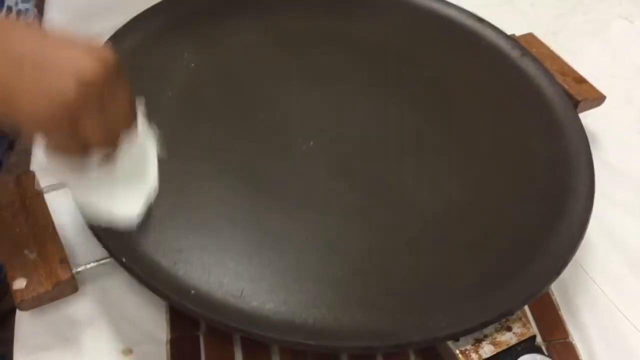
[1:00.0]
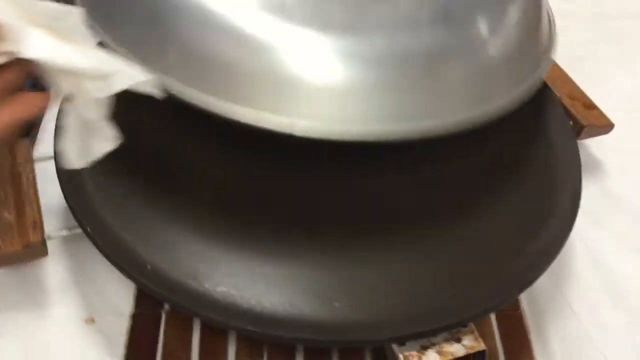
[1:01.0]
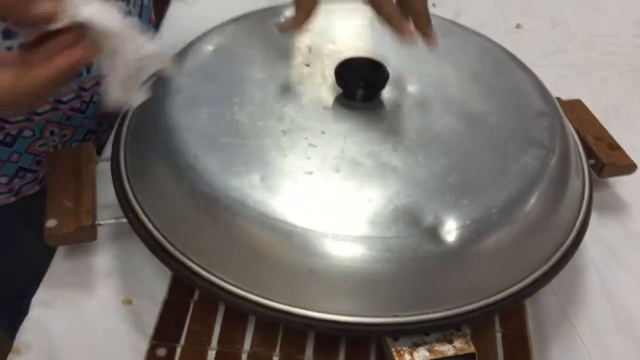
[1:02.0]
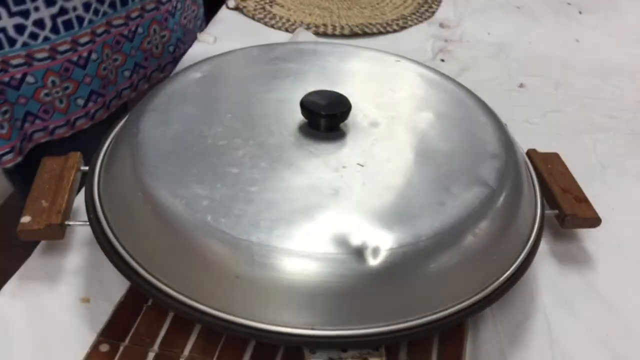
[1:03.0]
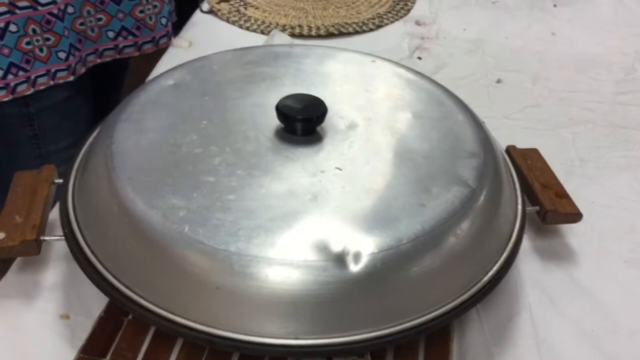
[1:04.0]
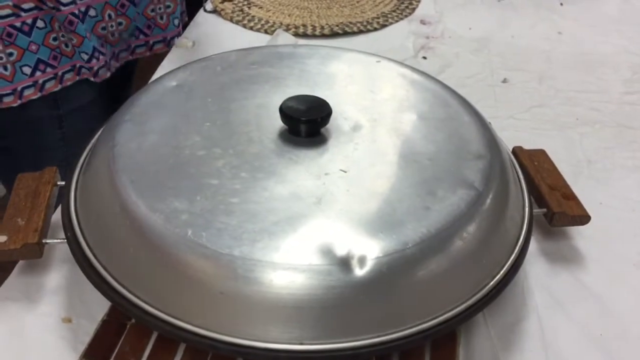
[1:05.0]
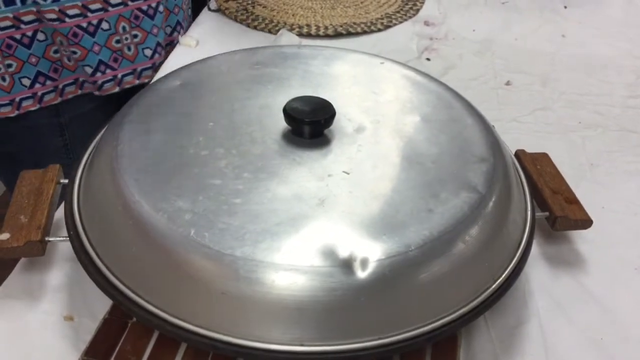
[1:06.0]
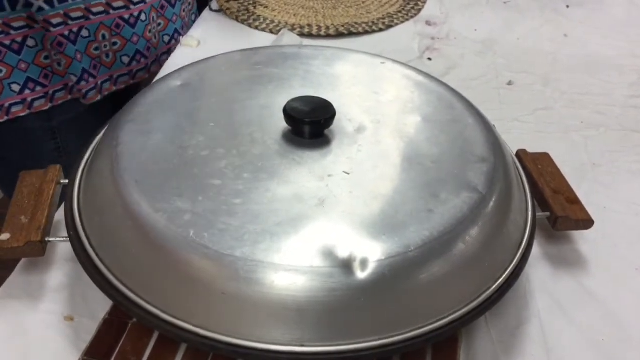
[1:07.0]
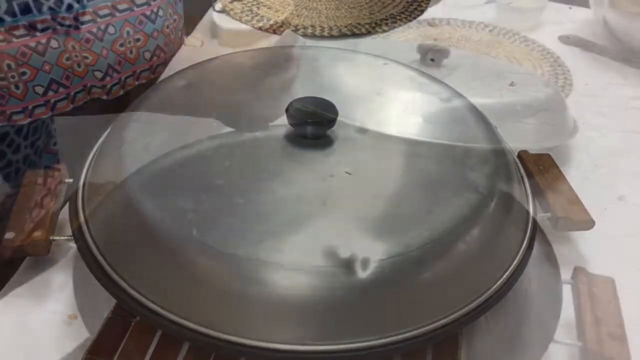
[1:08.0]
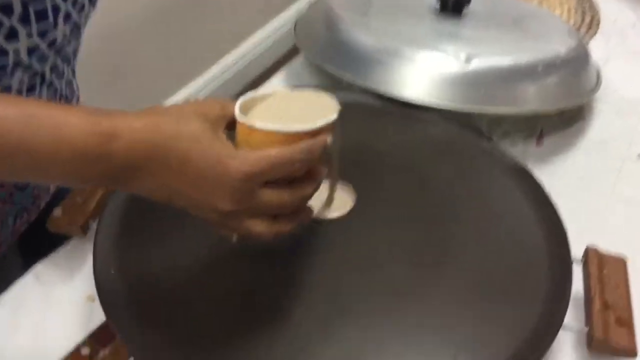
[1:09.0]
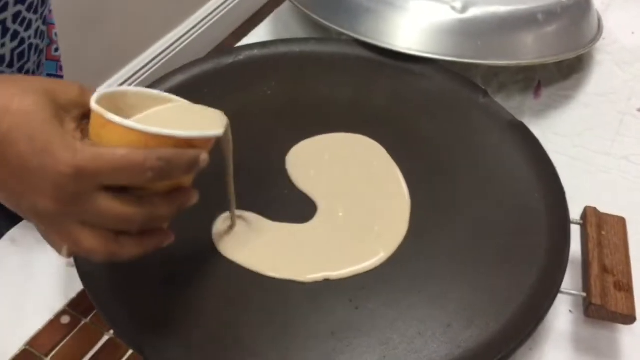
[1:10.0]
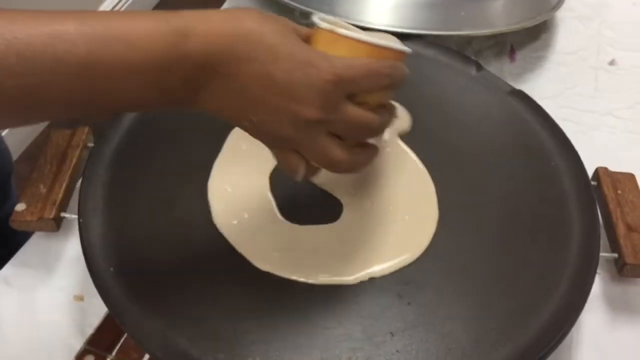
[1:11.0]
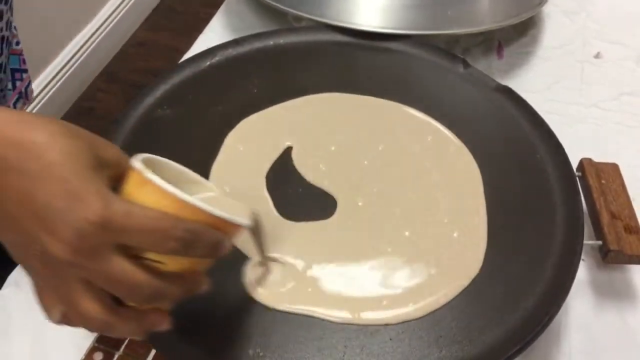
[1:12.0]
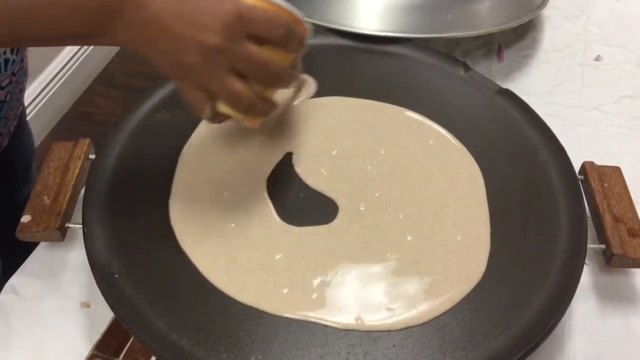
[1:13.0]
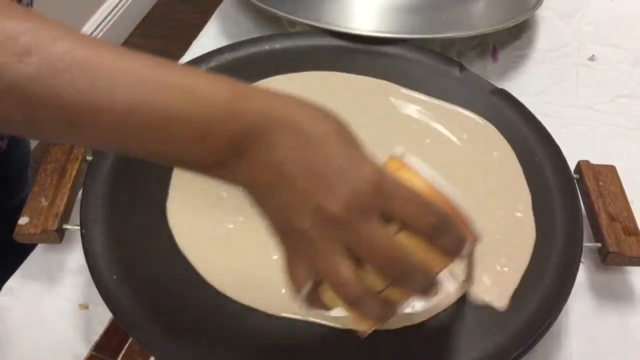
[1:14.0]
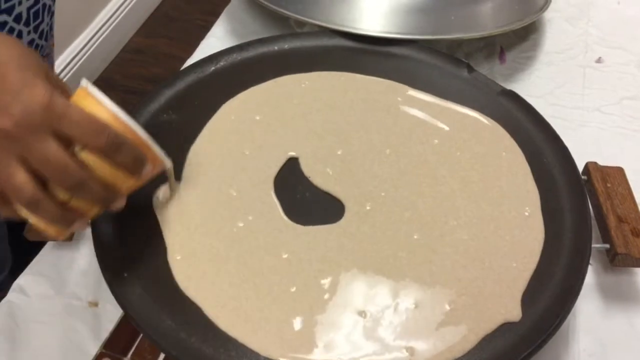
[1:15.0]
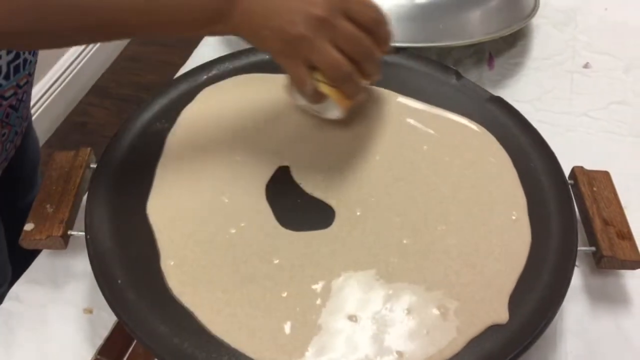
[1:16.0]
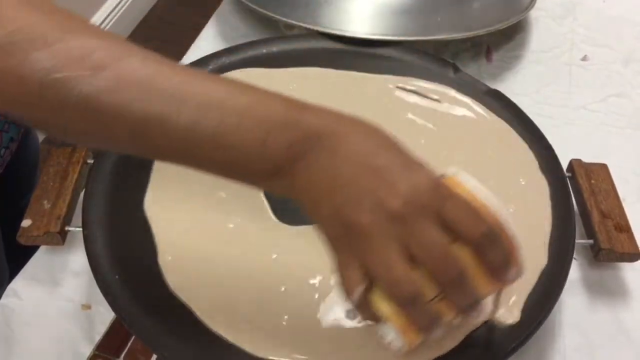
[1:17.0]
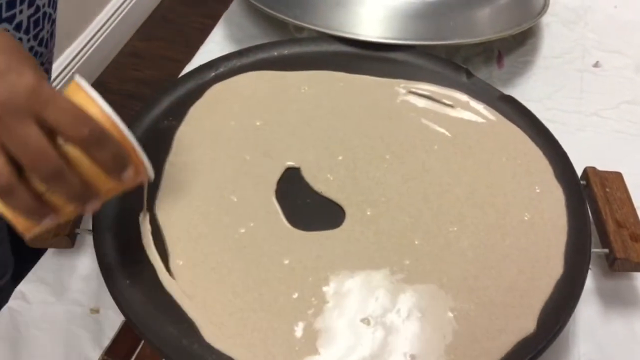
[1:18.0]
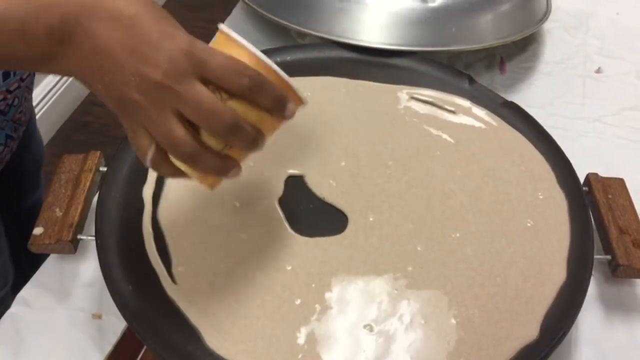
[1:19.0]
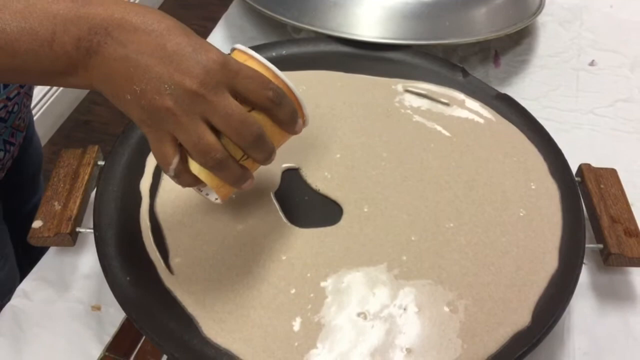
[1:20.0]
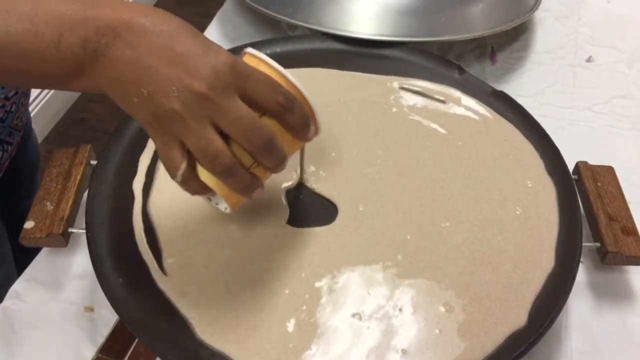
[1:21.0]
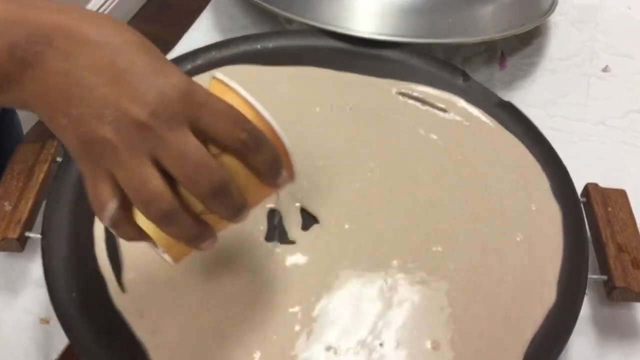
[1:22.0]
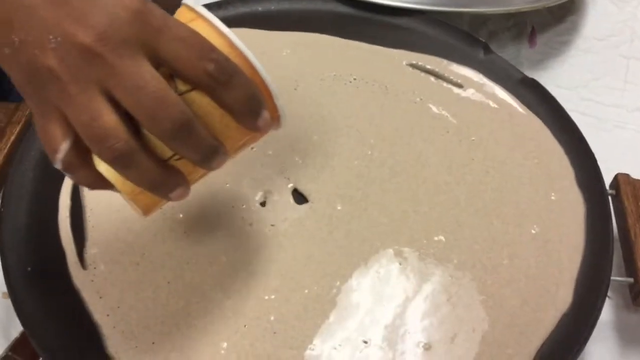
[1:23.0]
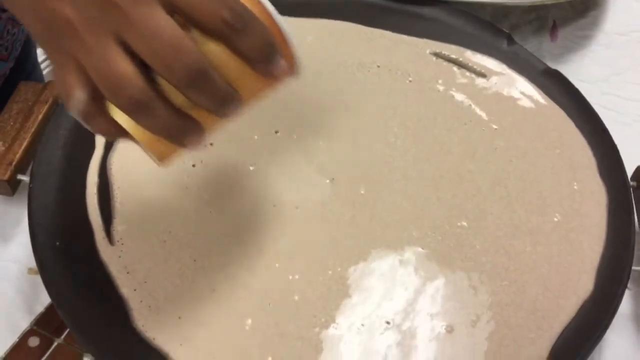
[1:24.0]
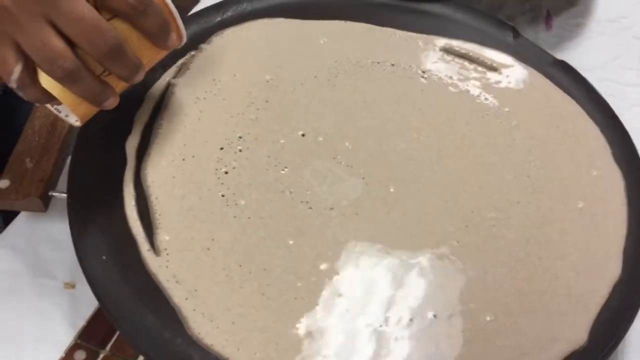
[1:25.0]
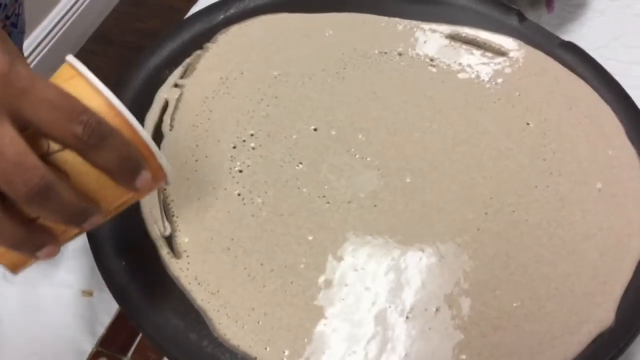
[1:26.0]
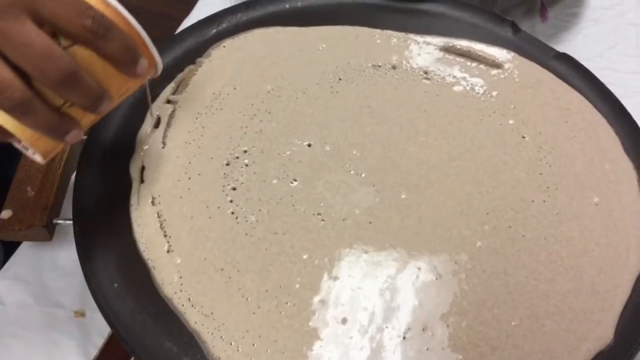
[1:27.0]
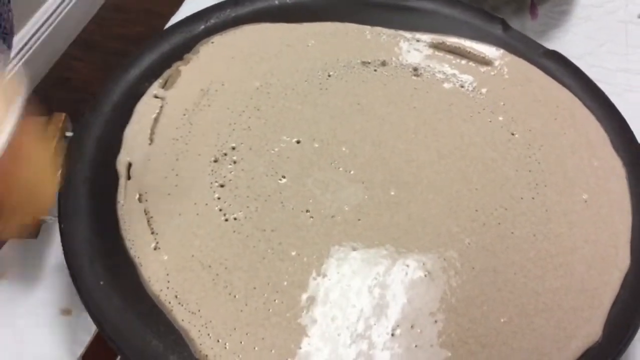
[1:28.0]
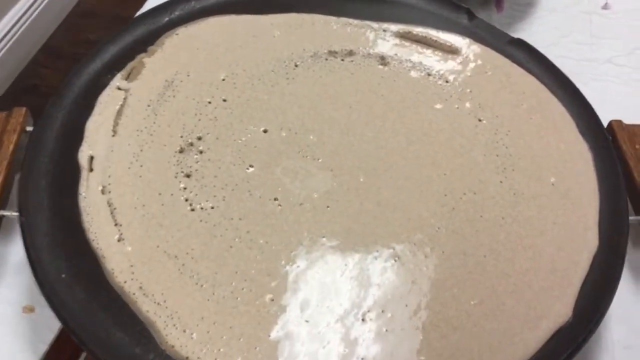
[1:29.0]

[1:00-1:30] The woman cleans the hot plate with a scrunched-up paper towel, moving it in a circular pattern. She lifts the paper towel with her right hand and, holding the handle of the lid with her left hand, places the lid back onto the hot plate before putting the paper towel down on the table, just above or behind on the desk or table. After a transition, the woman pours floury liquid from a cup in almost the same process as before, starting with an initial circle and pouring in a clockwise spiral pattern, leaving a small hole in the middle and small gaps on the sides. She then fills the hole in the middle with the liquid, as well as the small splits or gaps on the left-hand side.